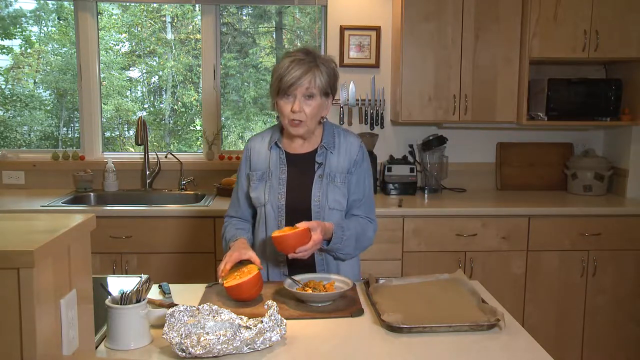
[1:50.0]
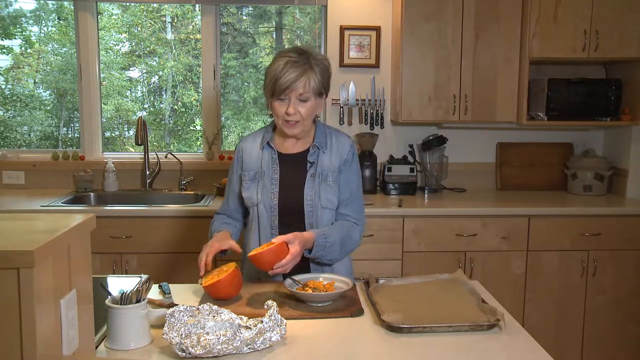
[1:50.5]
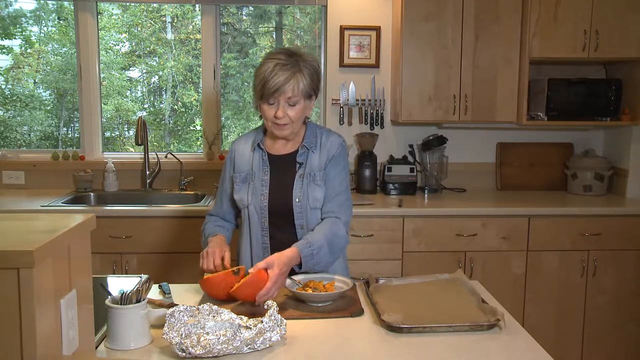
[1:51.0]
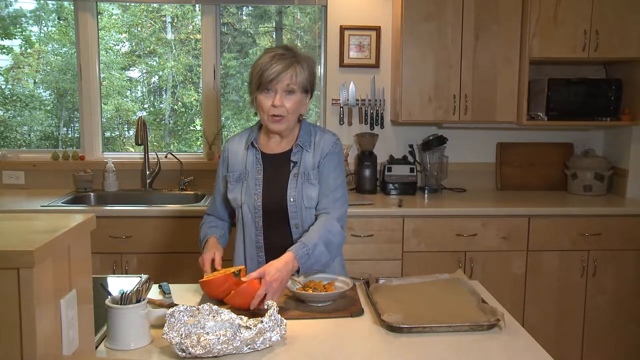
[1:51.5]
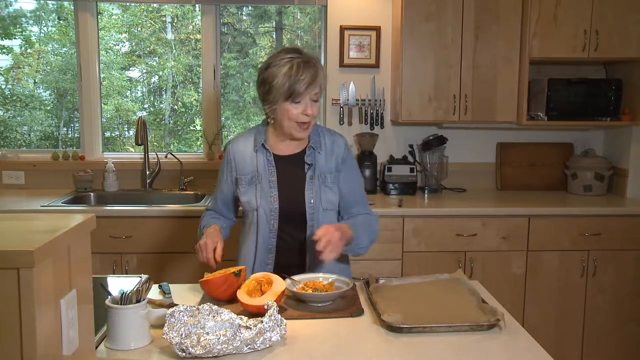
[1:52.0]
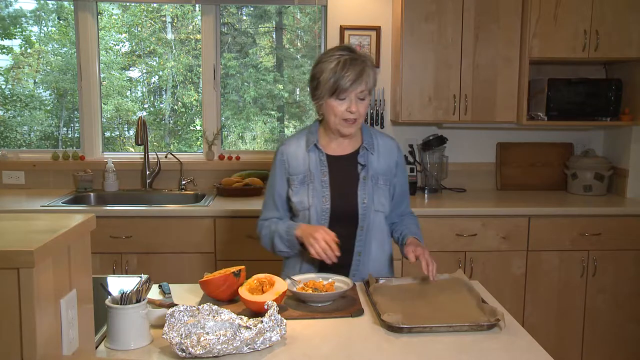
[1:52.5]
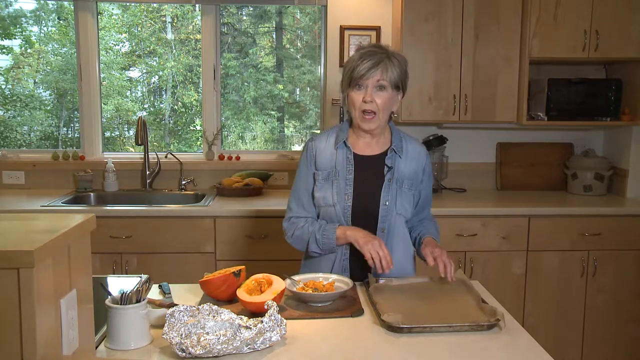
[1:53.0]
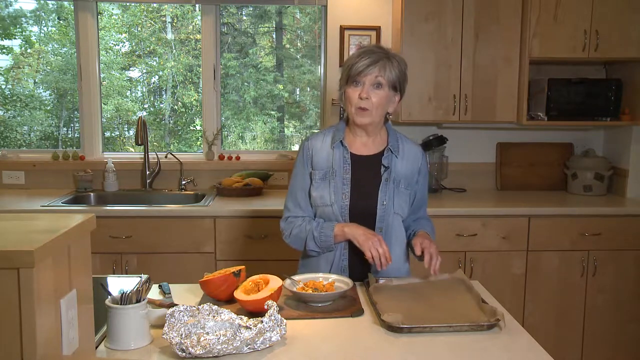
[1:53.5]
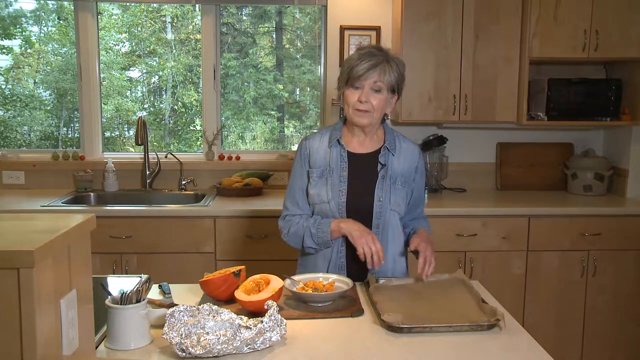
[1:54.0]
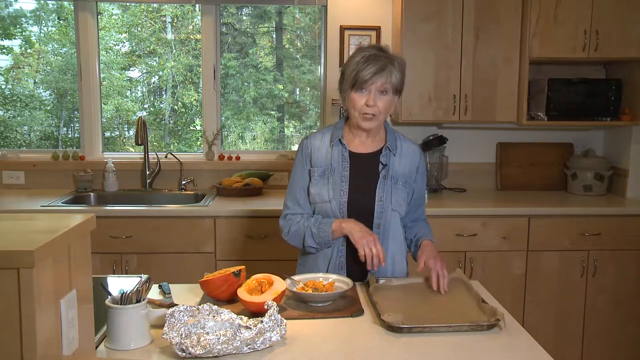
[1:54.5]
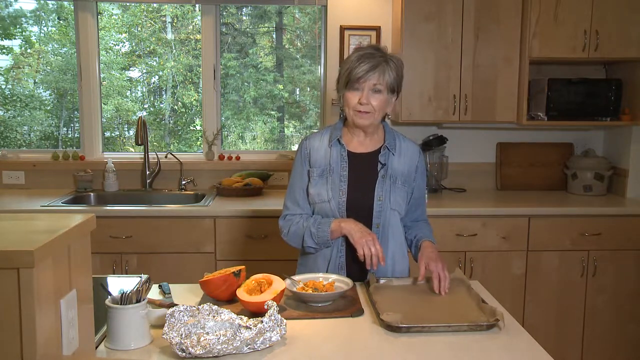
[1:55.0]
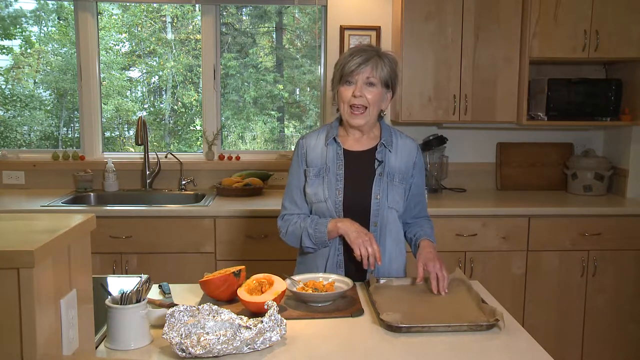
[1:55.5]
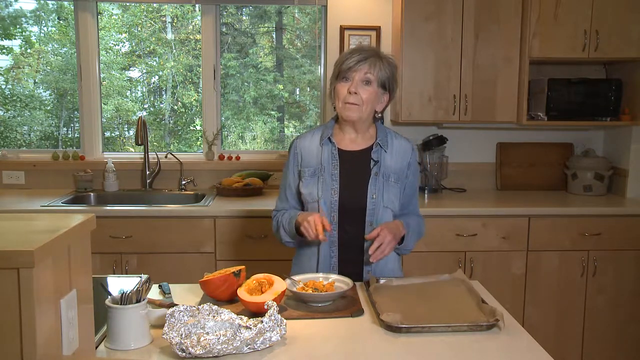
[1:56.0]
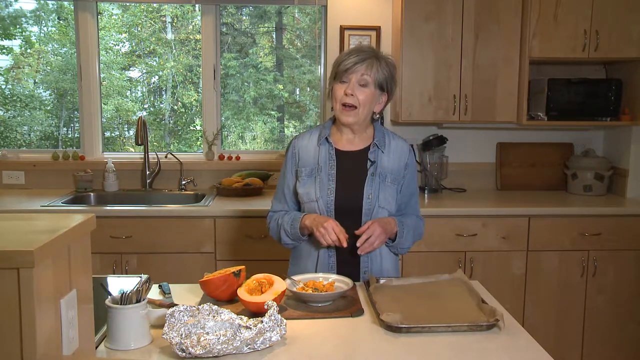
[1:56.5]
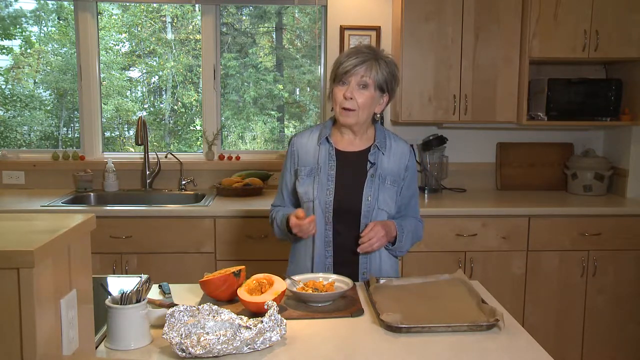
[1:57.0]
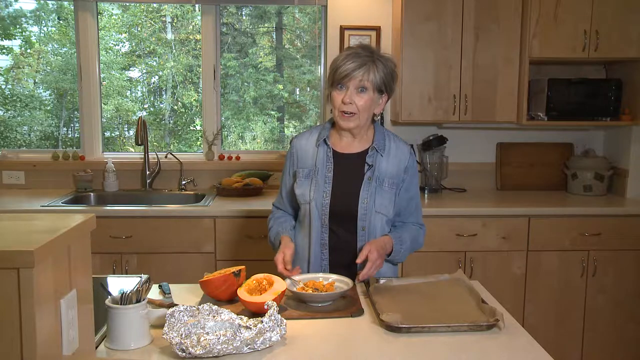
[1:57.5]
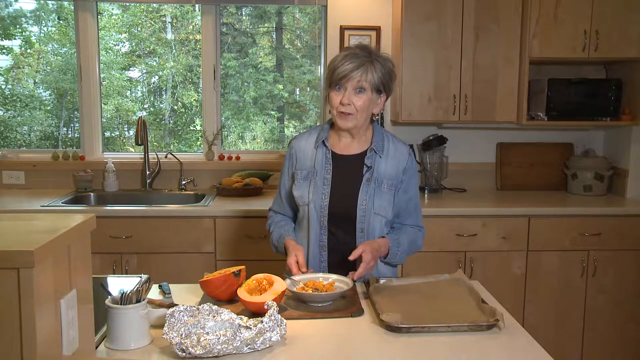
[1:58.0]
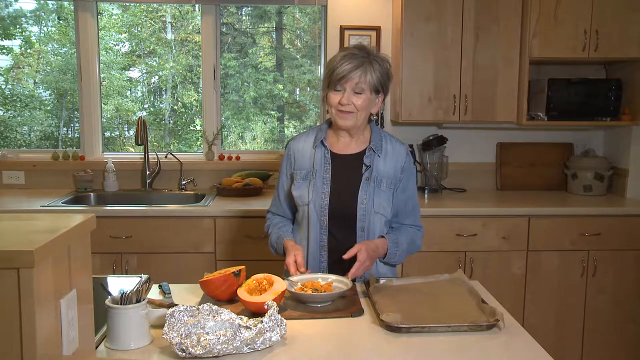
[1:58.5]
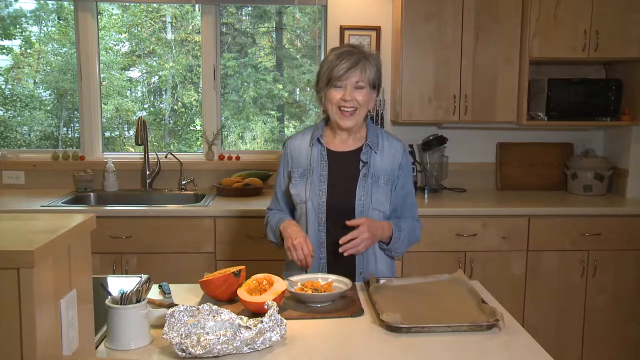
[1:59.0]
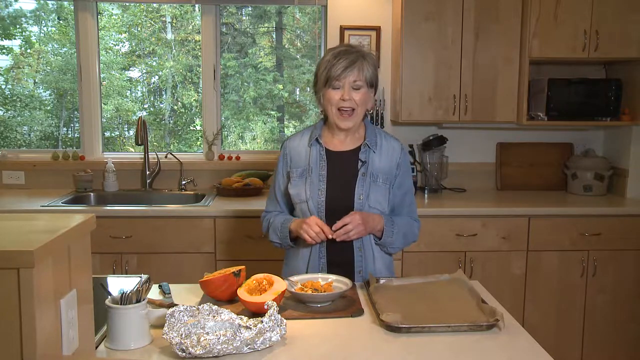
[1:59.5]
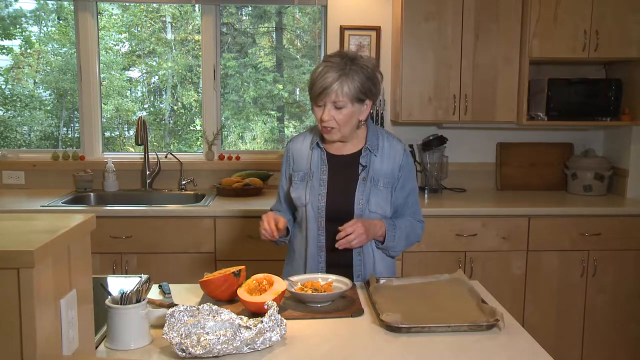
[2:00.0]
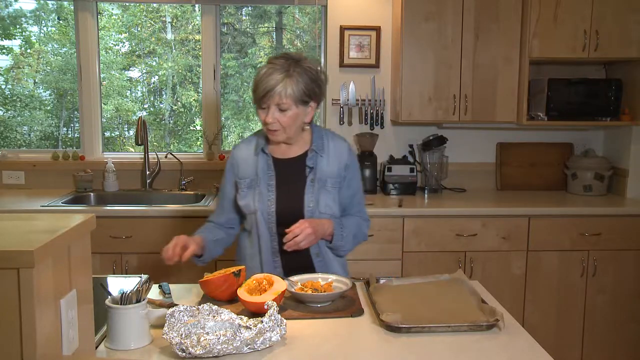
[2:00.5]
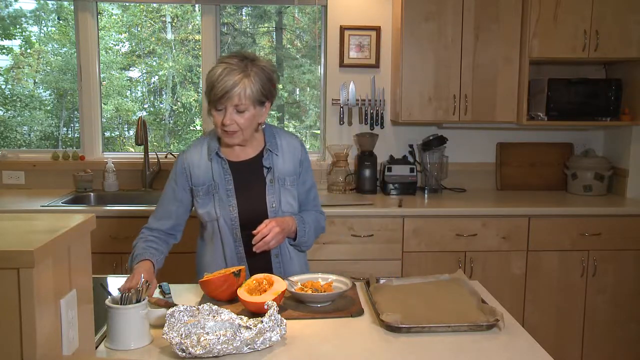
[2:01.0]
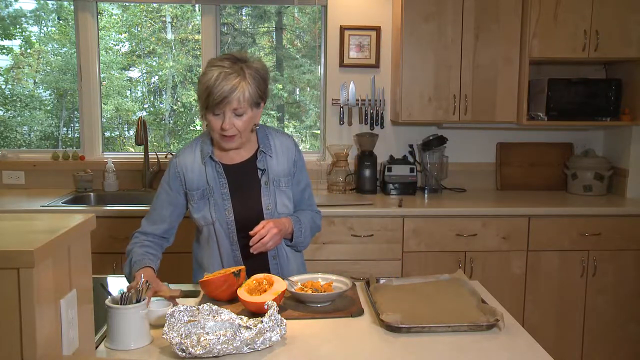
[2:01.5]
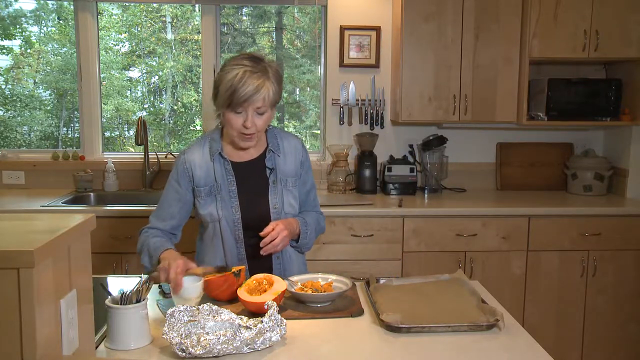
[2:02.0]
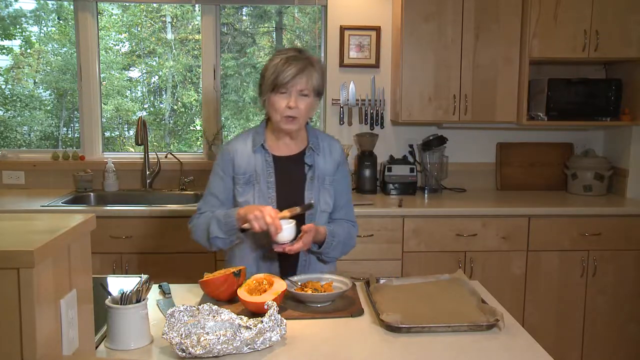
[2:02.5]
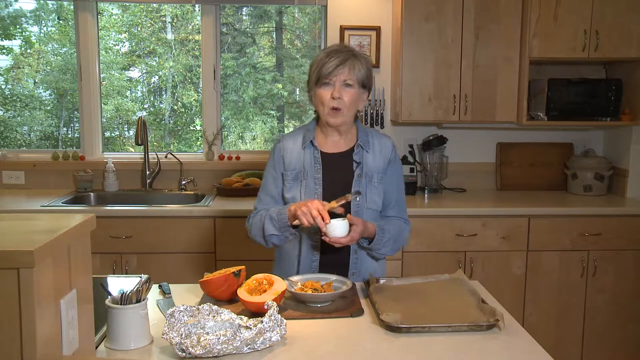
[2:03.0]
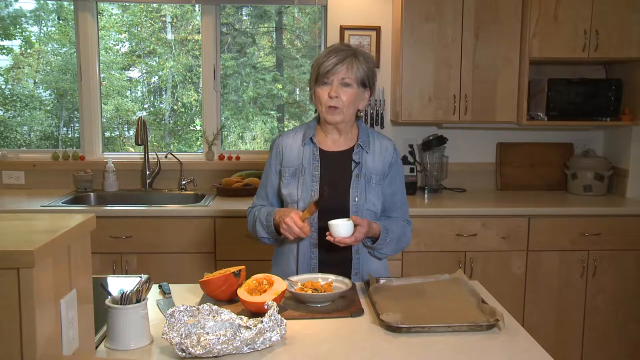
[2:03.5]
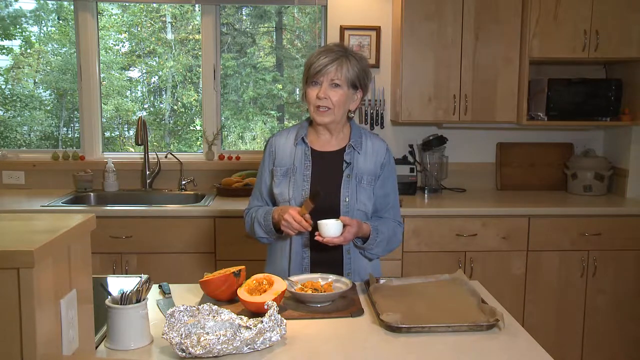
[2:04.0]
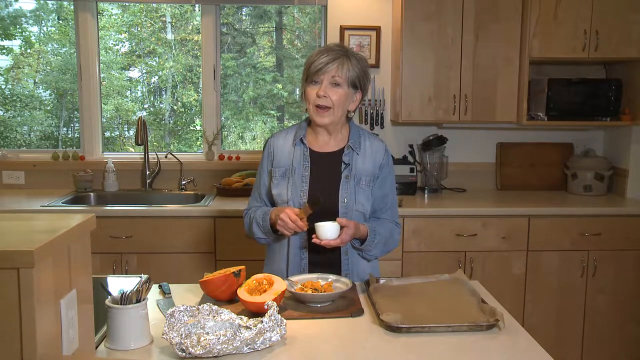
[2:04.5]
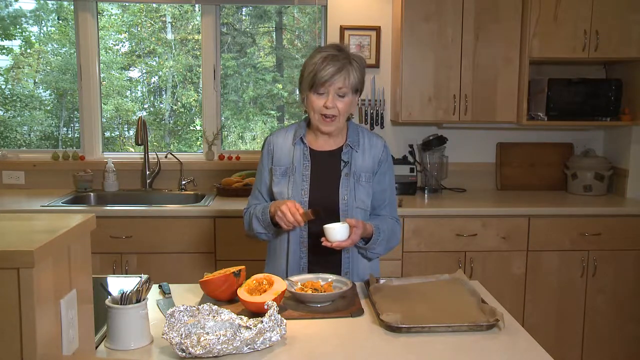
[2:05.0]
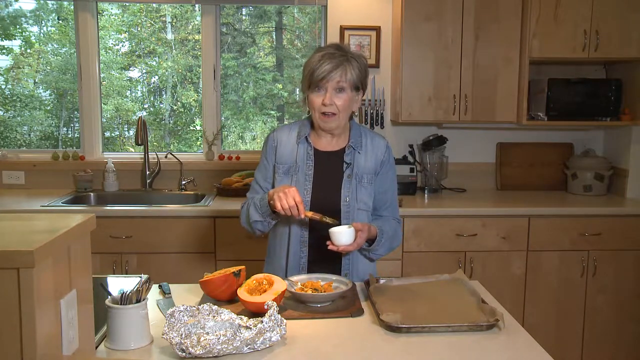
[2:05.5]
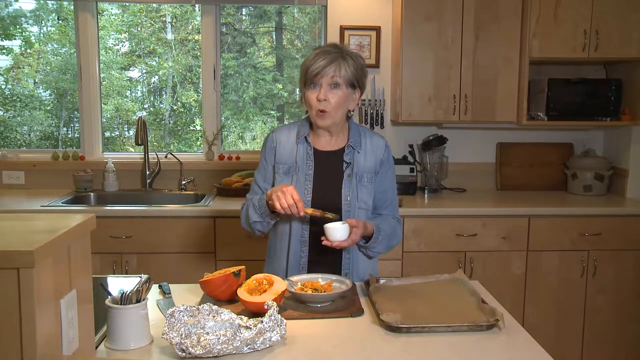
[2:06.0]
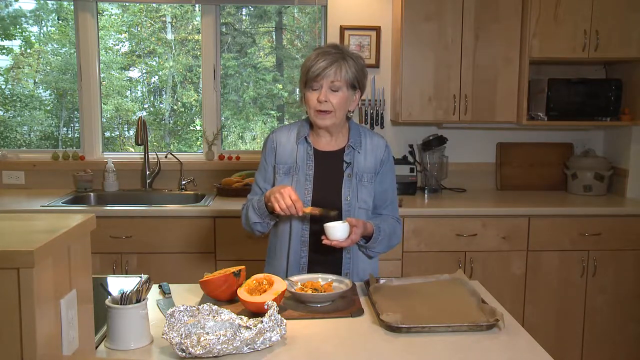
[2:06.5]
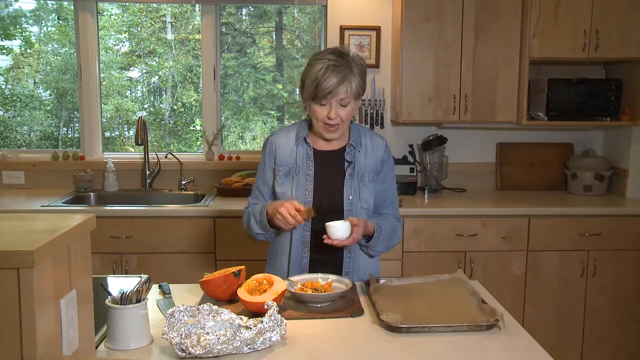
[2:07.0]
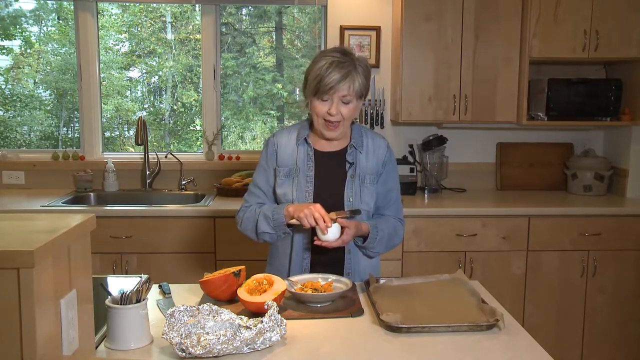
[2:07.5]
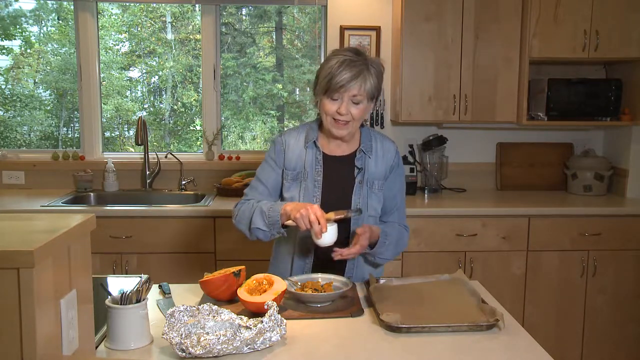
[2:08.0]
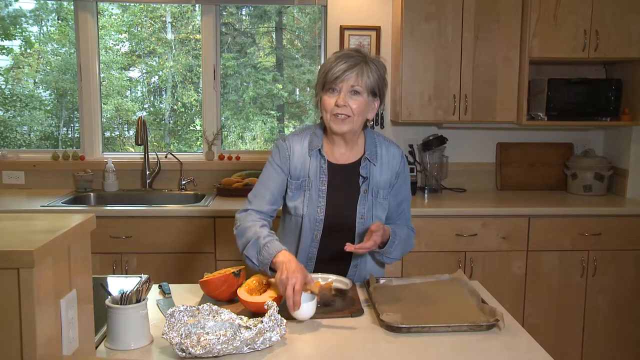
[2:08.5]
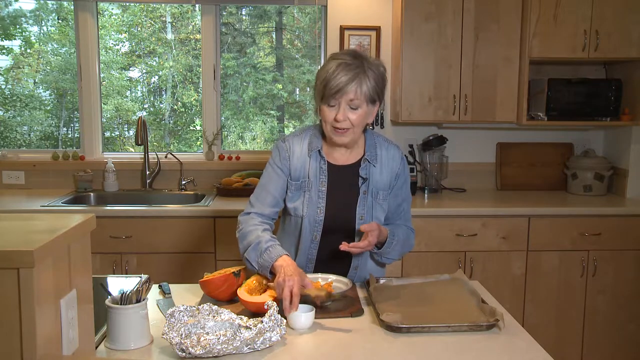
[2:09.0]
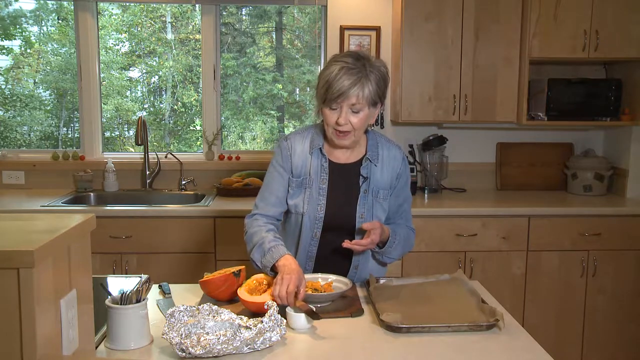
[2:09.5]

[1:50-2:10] The woman holds both halves of the one pumpkin, one in each hand. She sets down the half with the seeds removed and pushes the other half to the side a bit so both can sit on the cutting board. She turns her eyes to the baking pan and puts her hands on it slightly, looking as though she is preparing it. She picks up the pastry brush and a small white cup-like object and talks, apparently getting ready for her next step; she is probably going to line the parchment paper with whatever is in the small white container. She sets the container in front of the cutting board and puts the brush on top.